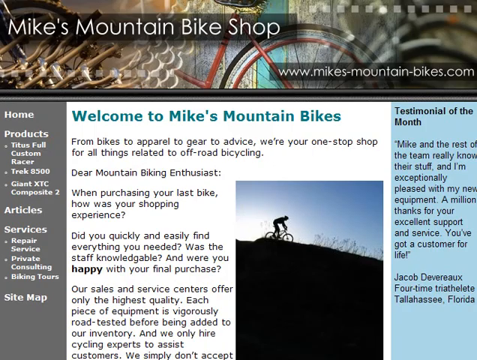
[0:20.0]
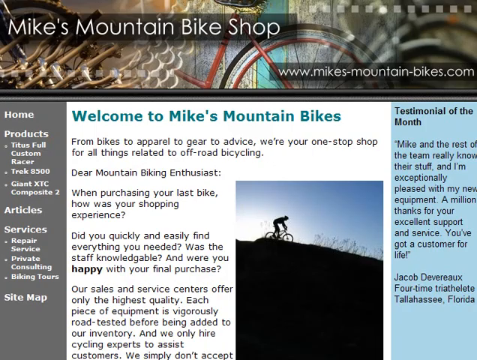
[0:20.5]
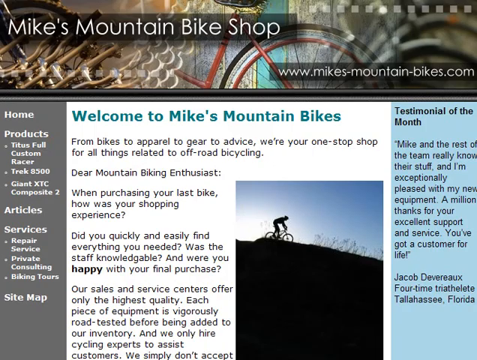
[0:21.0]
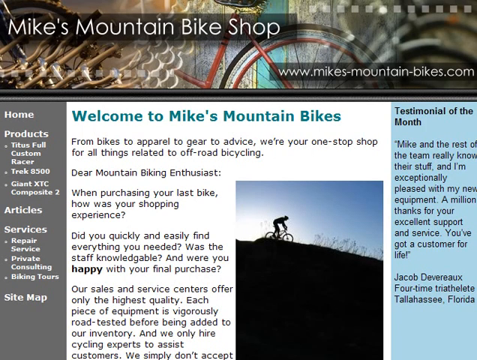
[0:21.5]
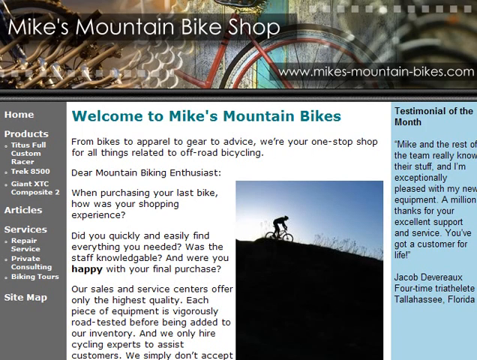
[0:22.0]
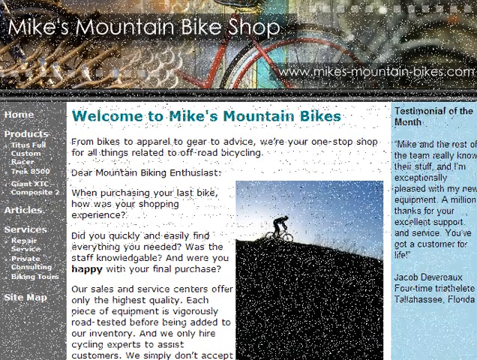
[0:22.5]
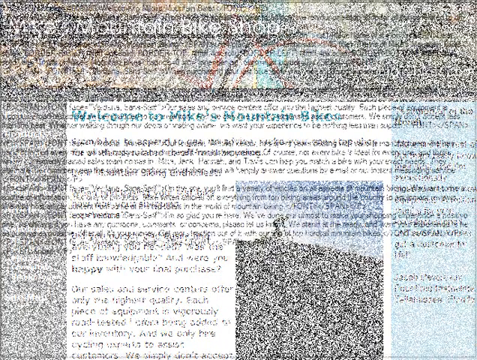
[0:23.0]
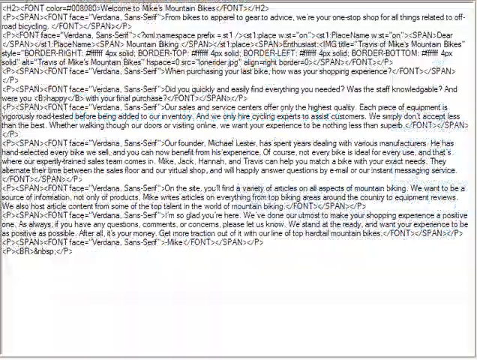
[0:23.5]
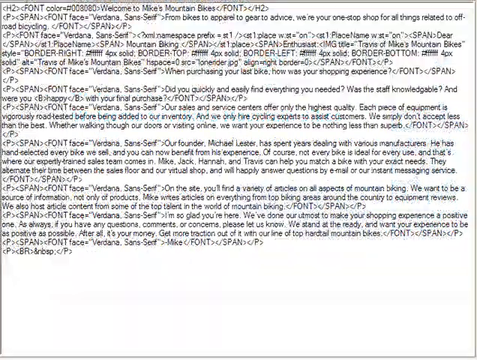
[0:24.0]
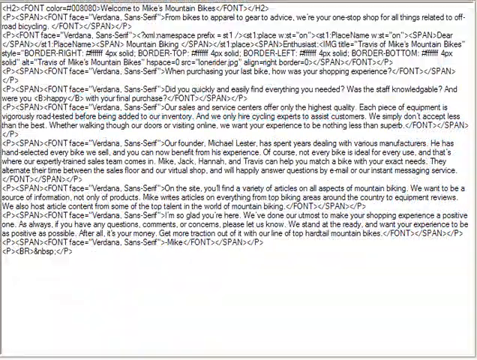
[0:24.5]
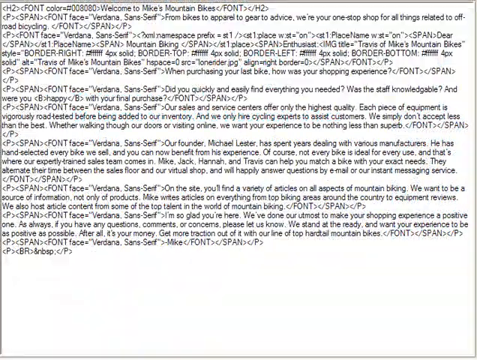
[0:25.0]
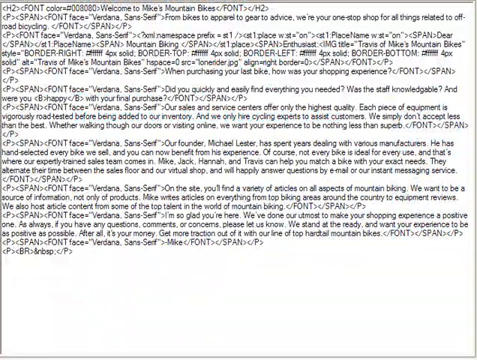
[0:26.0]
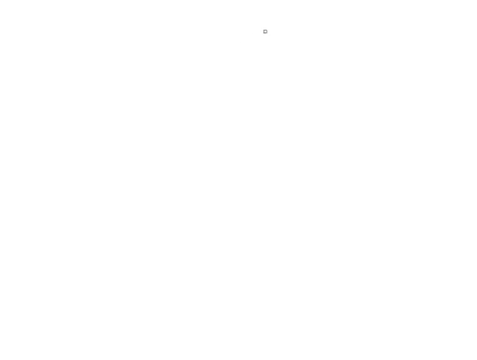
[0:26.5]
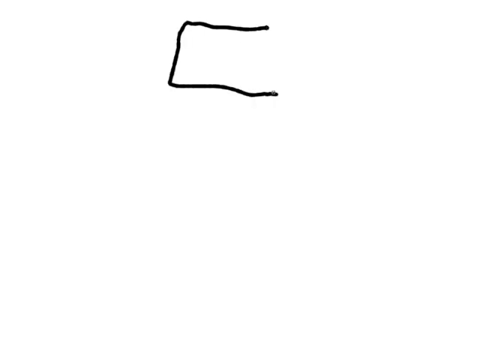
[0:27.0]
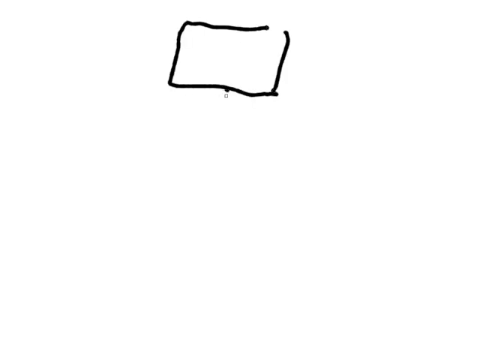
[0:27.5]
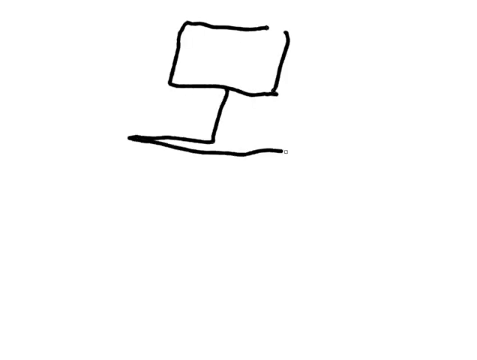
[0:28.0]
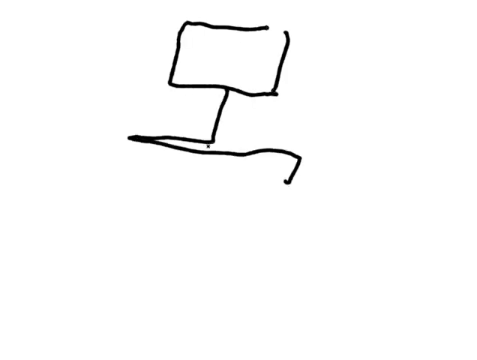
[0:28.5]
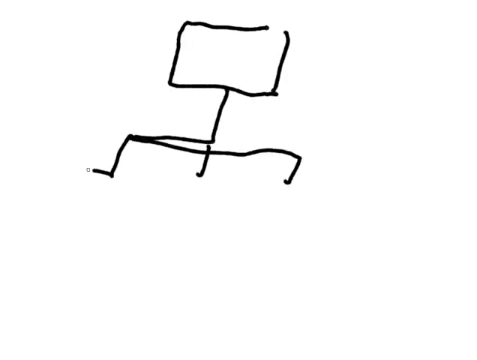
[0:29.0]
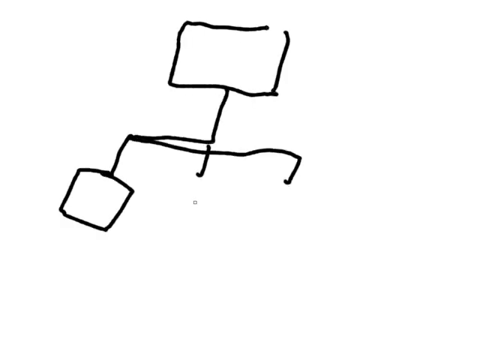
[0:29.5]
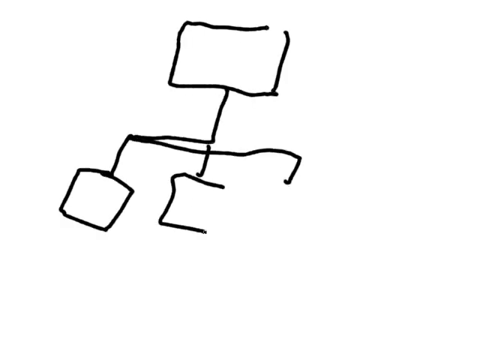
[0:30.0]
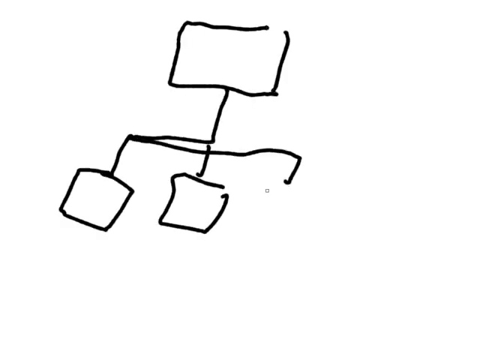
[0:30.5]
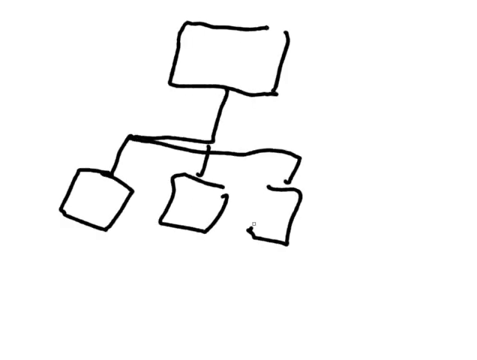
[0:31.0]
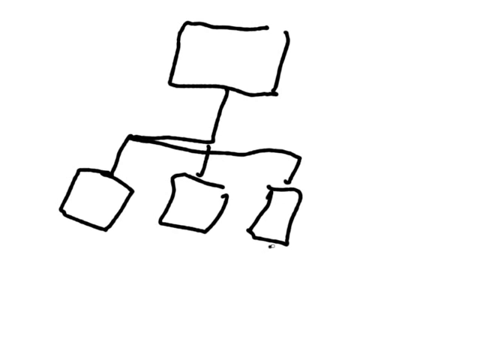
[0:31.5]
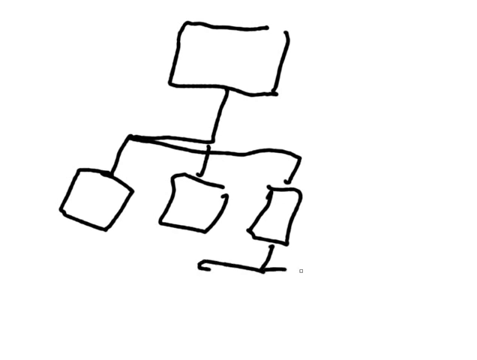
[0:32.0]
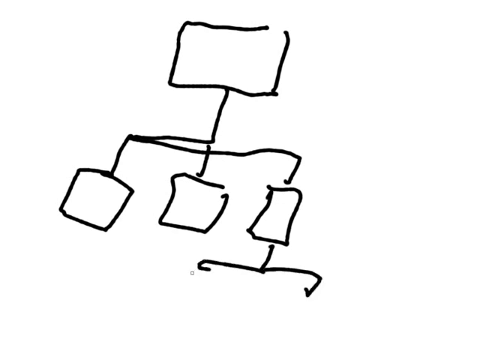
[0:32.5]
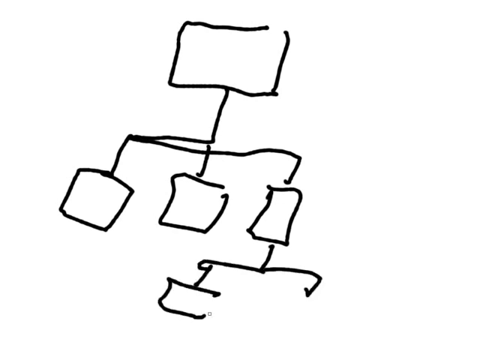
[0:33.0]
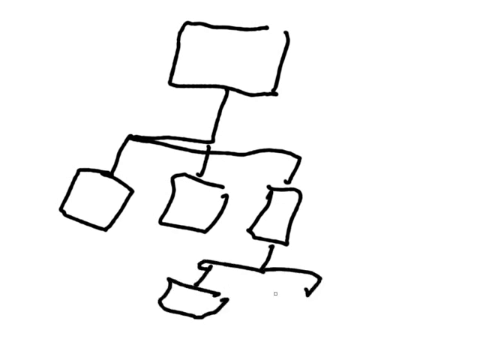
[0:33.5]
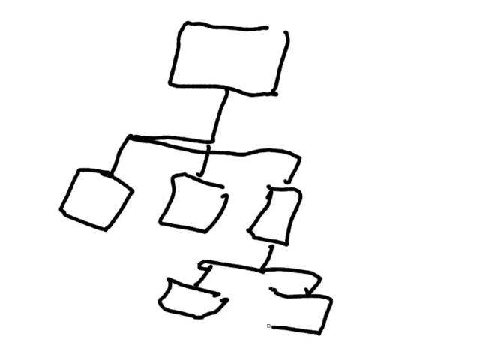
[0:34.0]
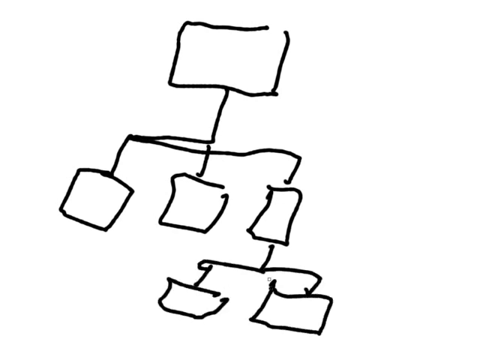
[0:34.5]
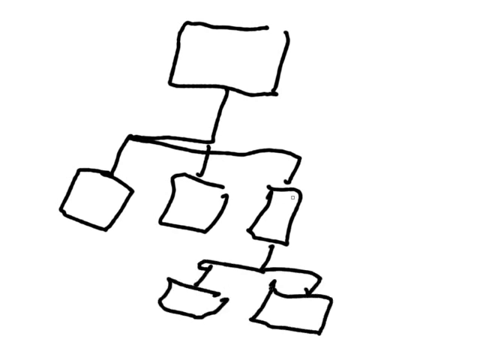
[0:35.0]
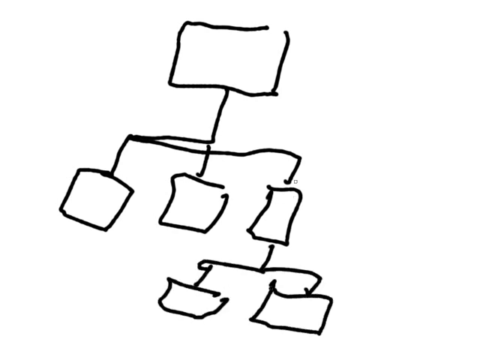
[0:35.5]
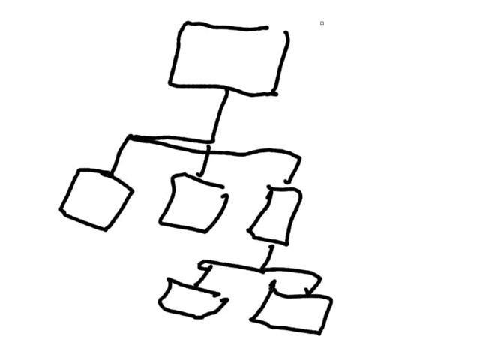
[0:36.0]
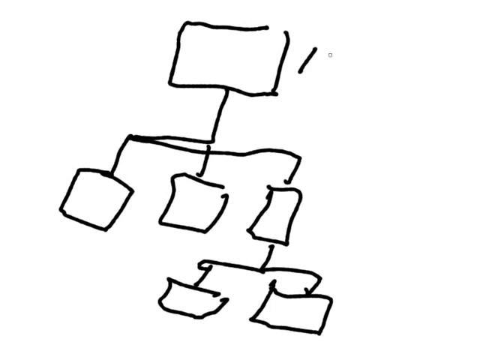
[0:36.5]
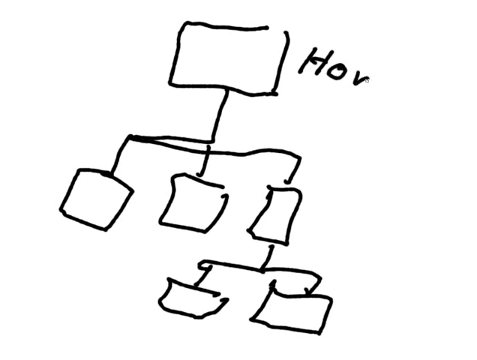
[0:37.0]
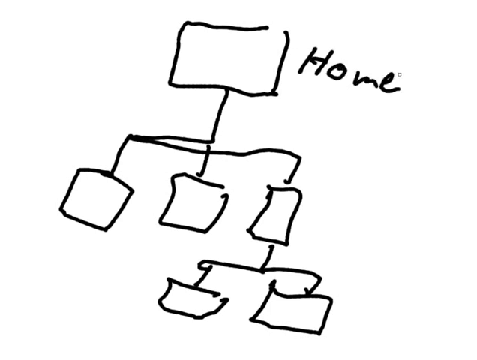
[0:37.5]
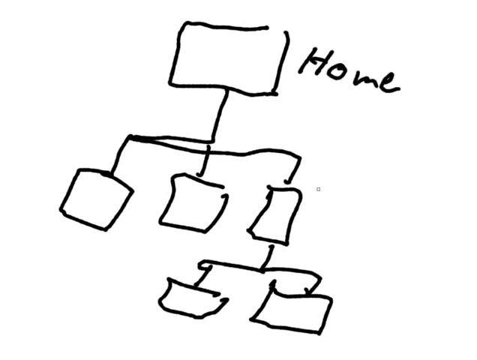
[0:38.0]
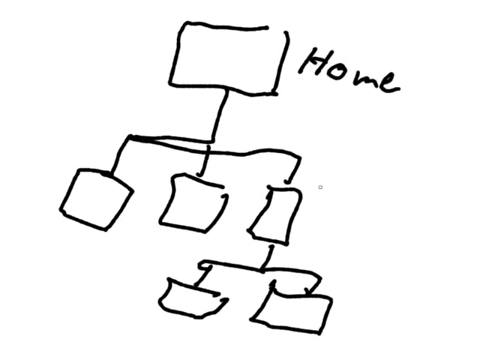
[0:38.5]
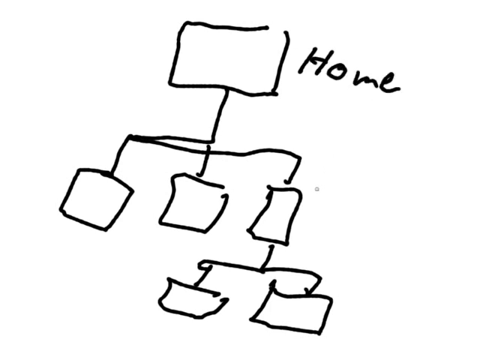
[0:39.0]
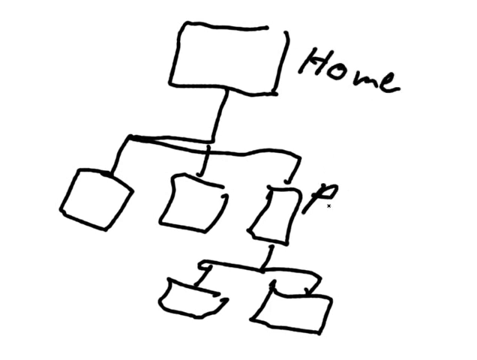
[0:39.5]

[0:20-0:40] The Mike's Mountain Bike Shop web page is shown at "www.mikesmountainbikes.com". Its text reads "Welcome to Mike's mountain bikes from bikes to apparel to gear to advice" and continues with "Dear mountain biking enthusiasts, when purchasing your last bike, how was your shopping experience? Did you quickly and easily find everything you needed? Was the staff knowledgeable and were you happy with your final purchase? Our sales and service centers provide the highest quality." Next comes a code page, followed by a drawing that looks like a stick drawing or some type of graph, of unclear meaning, with the word "home" on it.